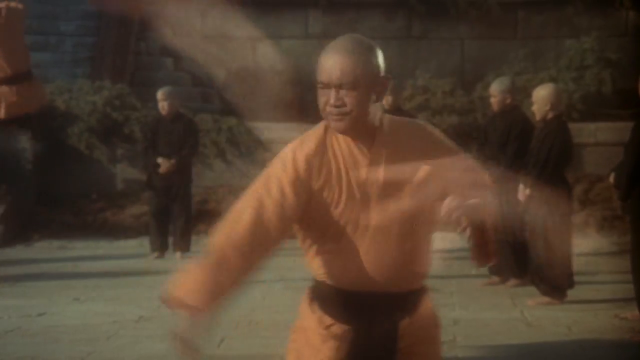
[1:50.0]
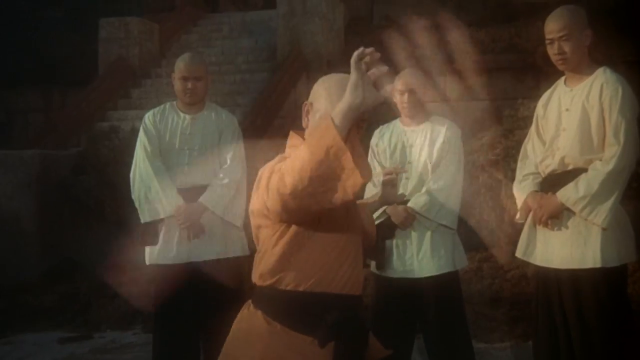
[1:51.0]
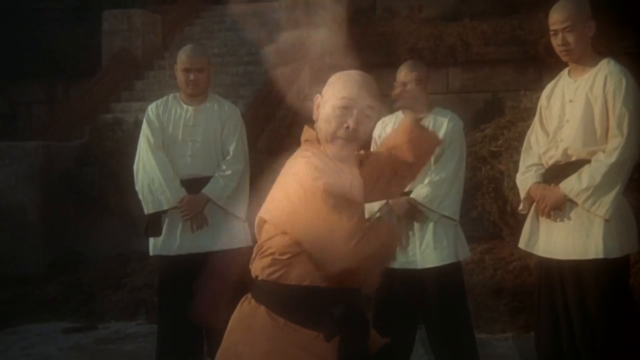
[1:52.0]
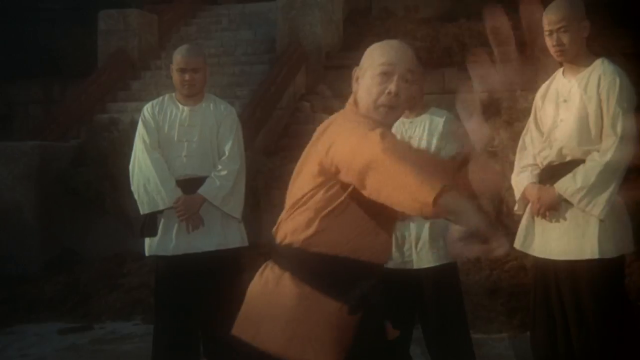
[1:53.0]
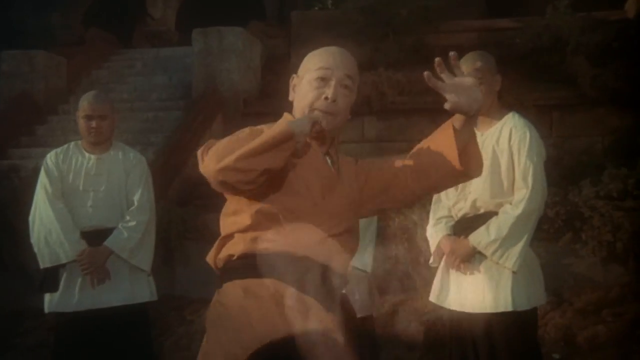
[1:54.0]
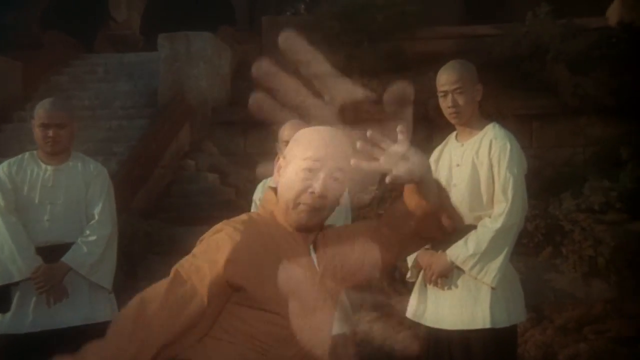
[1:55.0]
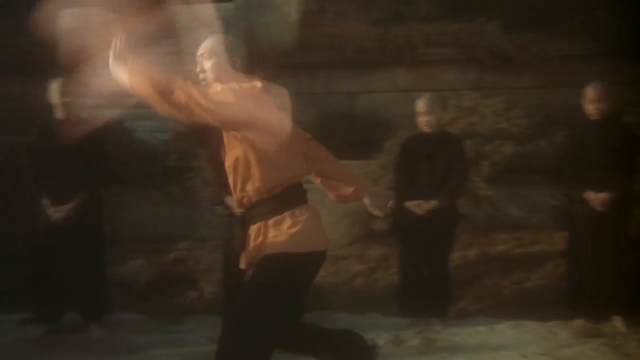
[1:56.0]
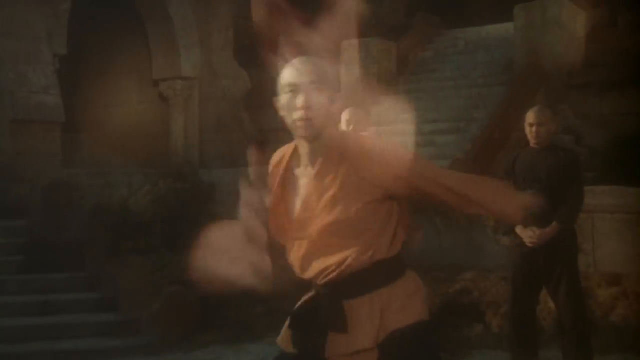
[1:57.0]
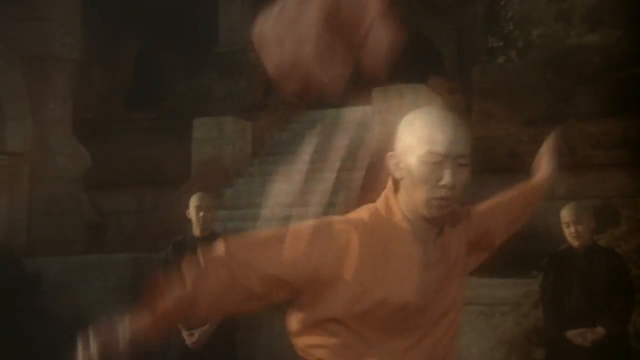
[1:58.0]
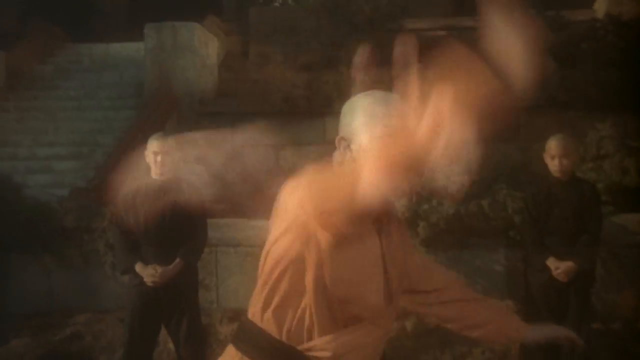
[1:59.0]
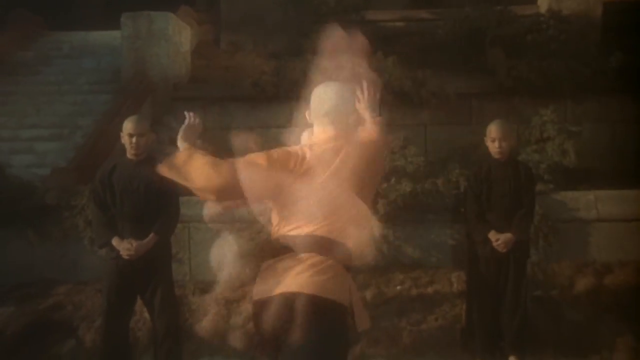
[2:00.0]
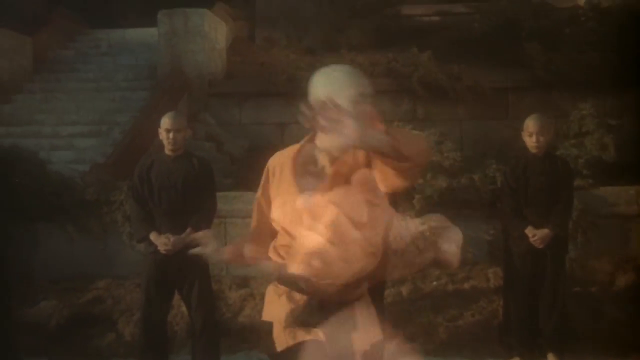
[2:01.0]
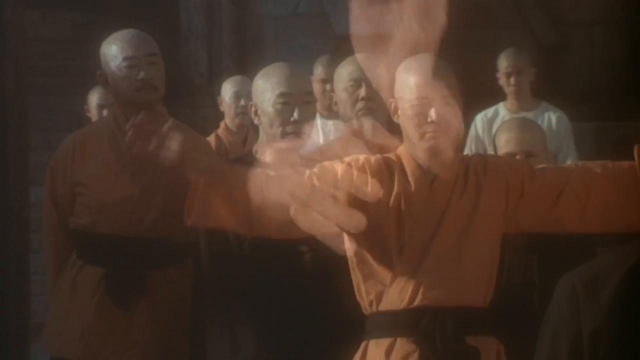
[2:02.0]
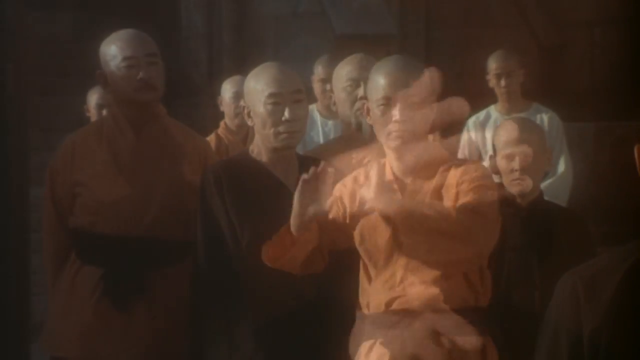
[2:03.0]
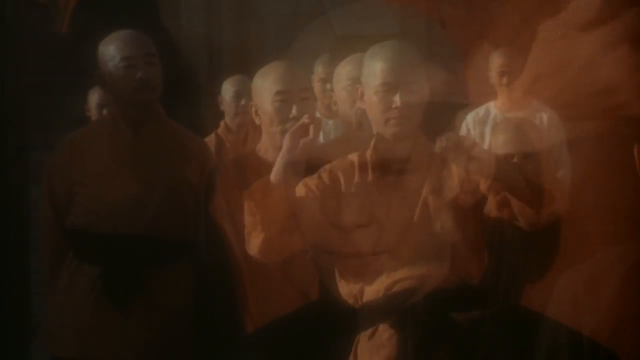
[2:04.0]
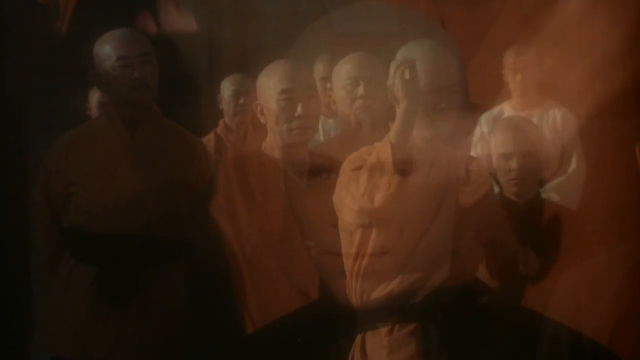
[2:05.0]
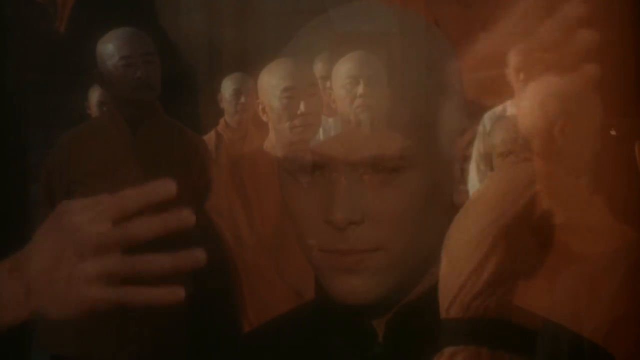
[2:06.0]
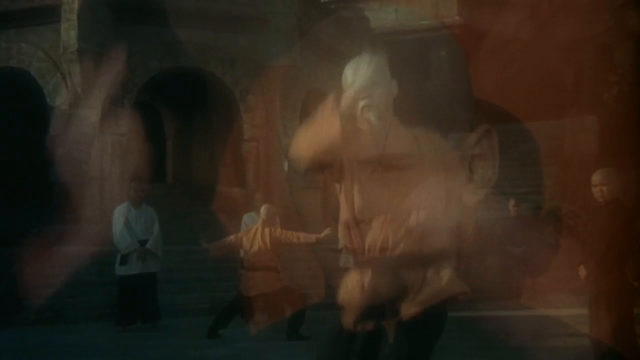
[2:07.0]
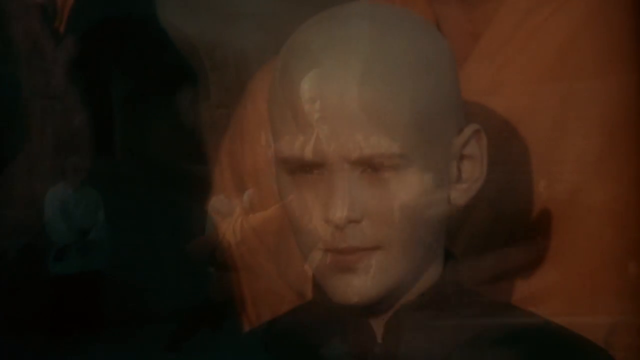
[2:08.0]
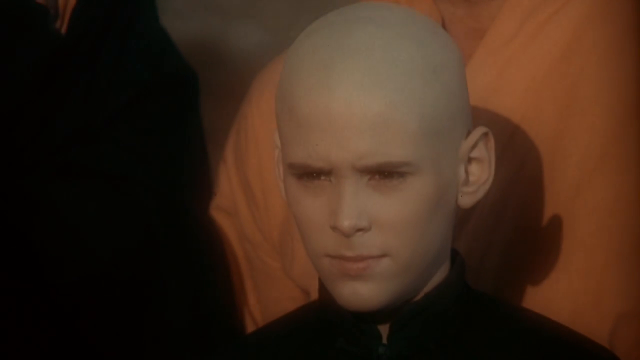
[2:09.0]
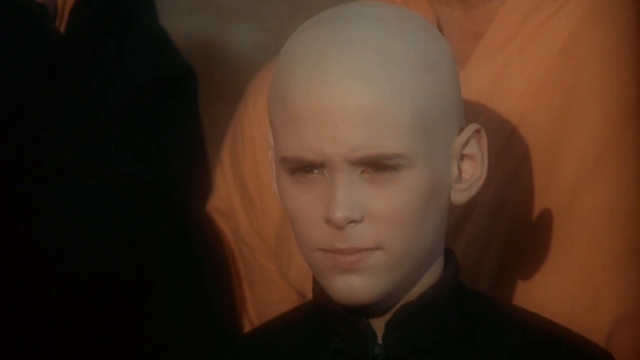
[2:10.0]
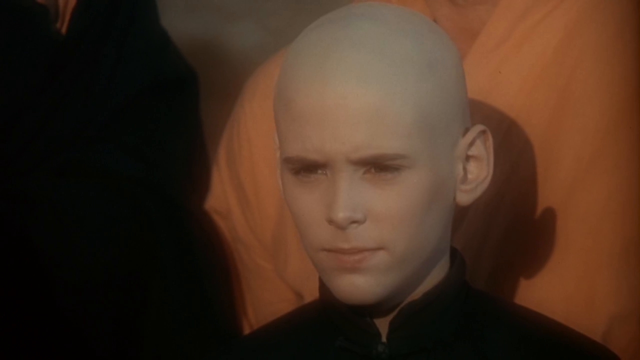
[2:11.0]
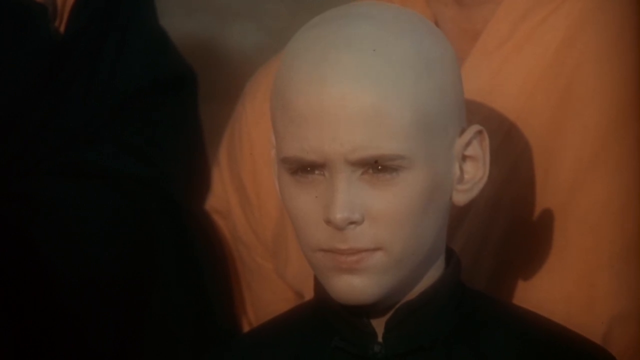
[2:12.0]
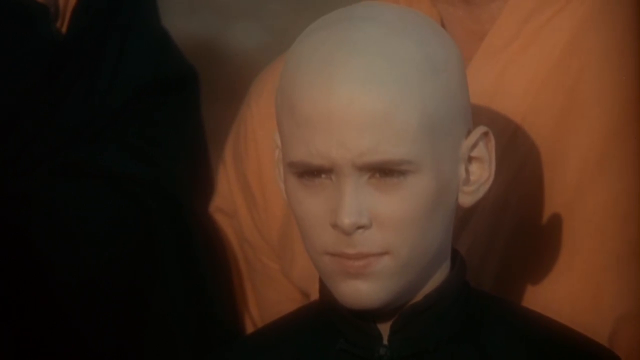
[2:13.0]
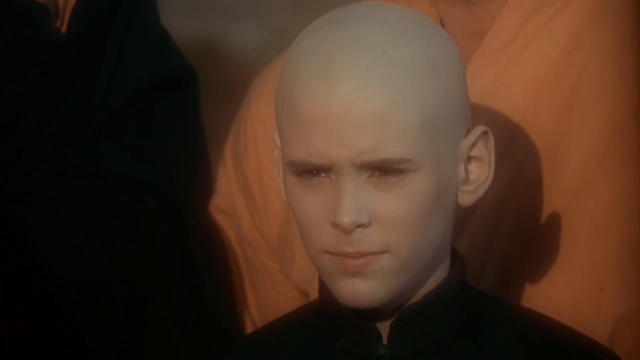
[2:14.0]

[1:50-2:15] The younger monks imitate the talons of the hawk and the talons of the tiger. They make peculiar moves in the air, kicking with their feet and using the whole body as a weapon while working out their muscles. Transparent hands in the background show other techniques while the monks continue their moves. The younger generation stands in the back with discipline, watching the monks perform, and the older generation takes special care in teaching. The video then cuts to a young person watching all the moves, his image slightly transparent in front of the other monks' practice. The image then solidifies until the other monks are no longer visible, and he is presented as the main character.